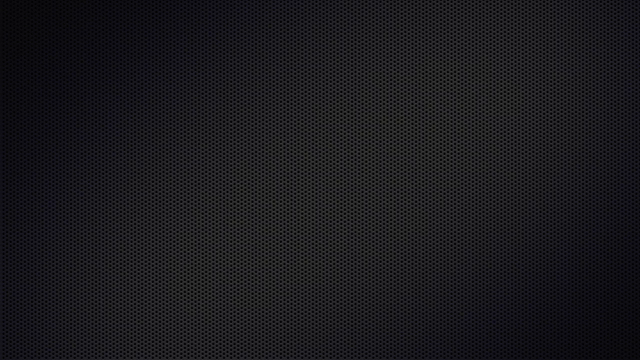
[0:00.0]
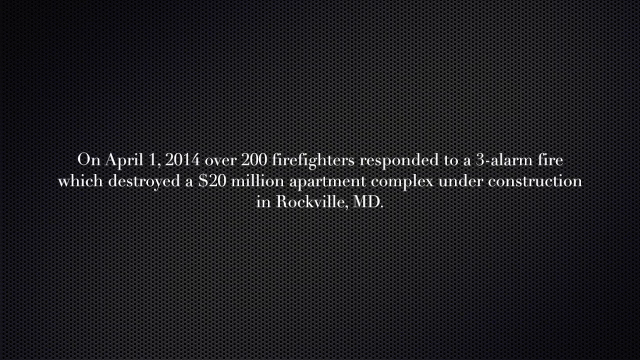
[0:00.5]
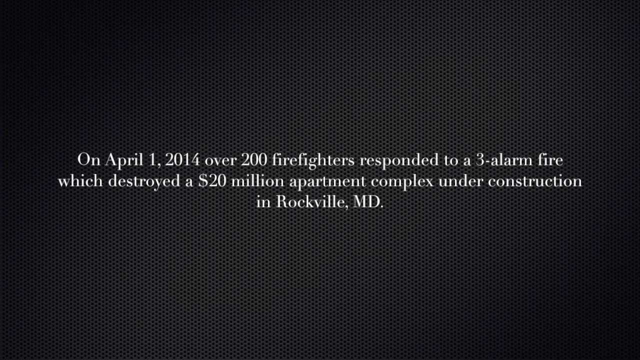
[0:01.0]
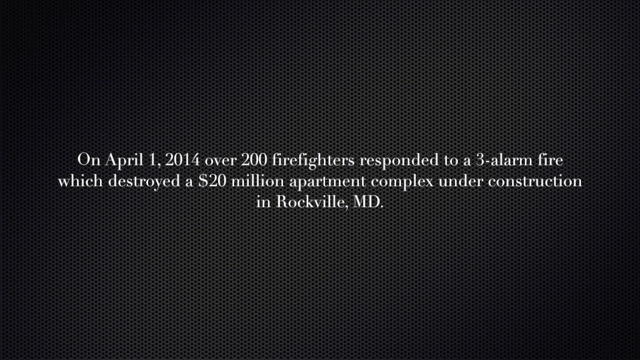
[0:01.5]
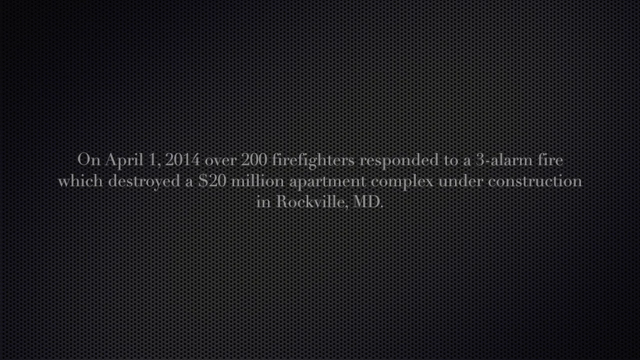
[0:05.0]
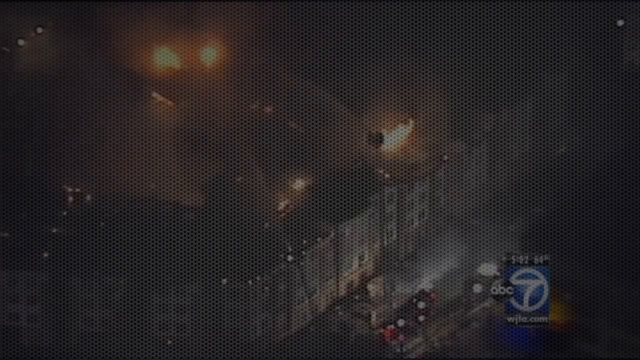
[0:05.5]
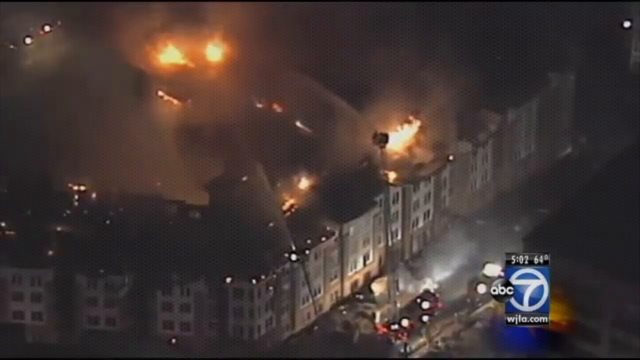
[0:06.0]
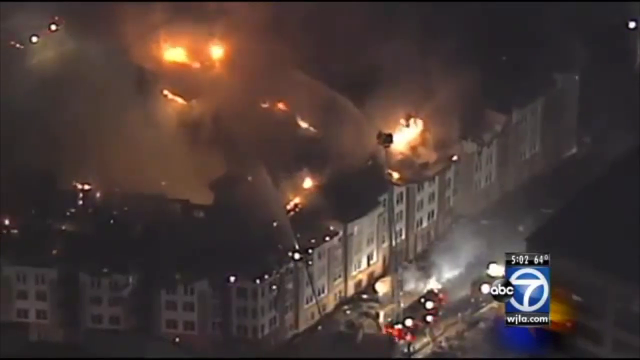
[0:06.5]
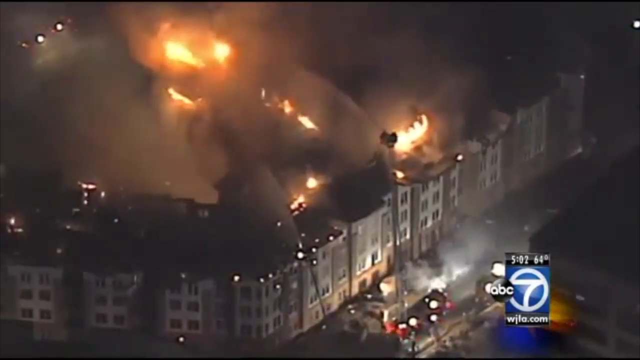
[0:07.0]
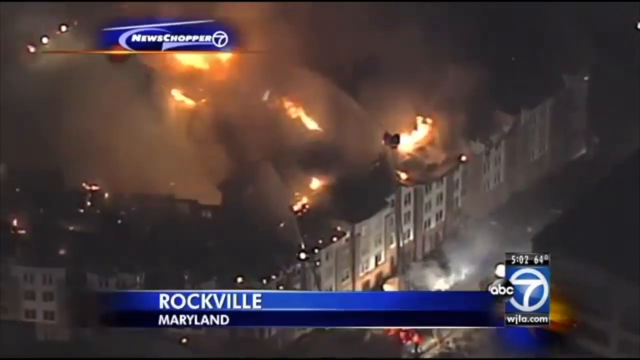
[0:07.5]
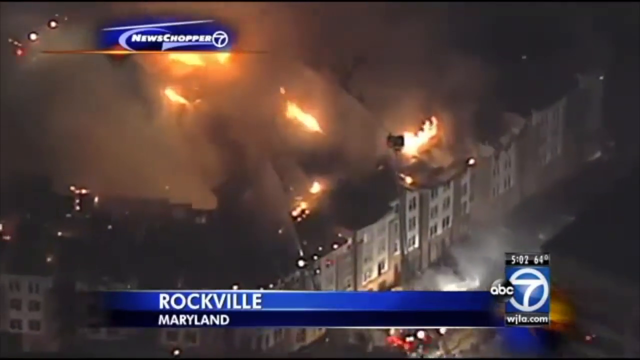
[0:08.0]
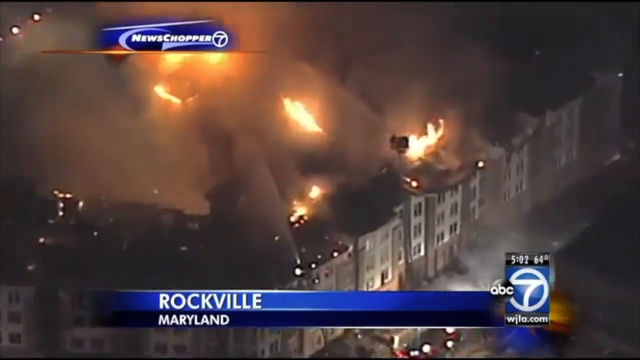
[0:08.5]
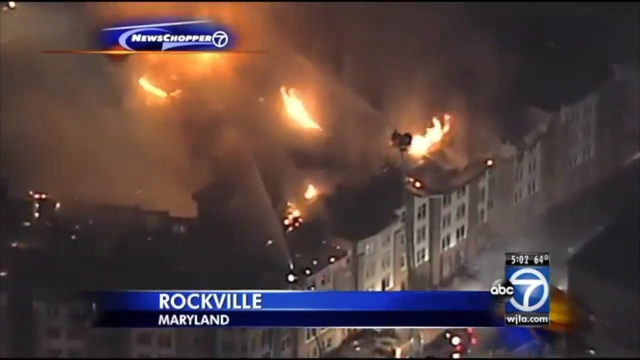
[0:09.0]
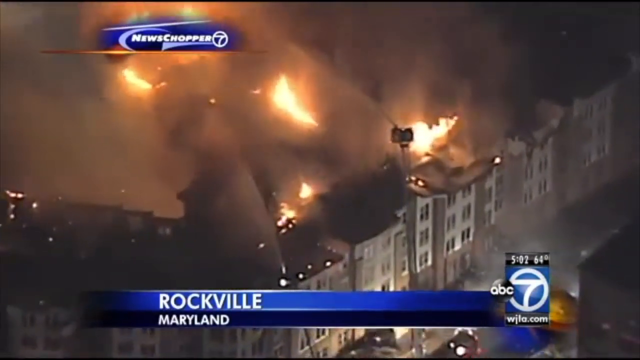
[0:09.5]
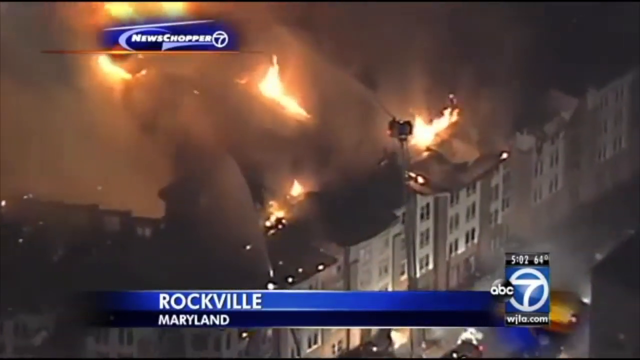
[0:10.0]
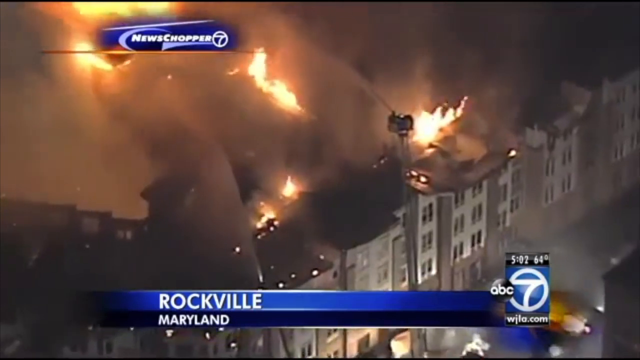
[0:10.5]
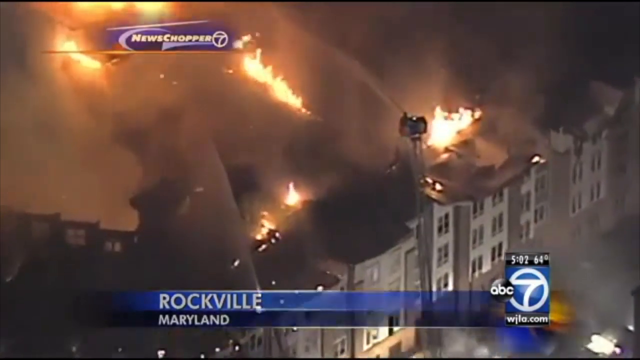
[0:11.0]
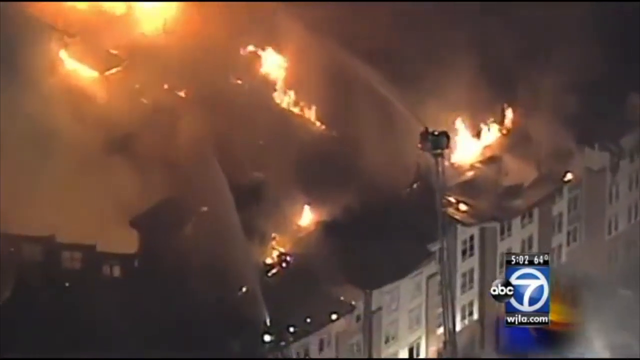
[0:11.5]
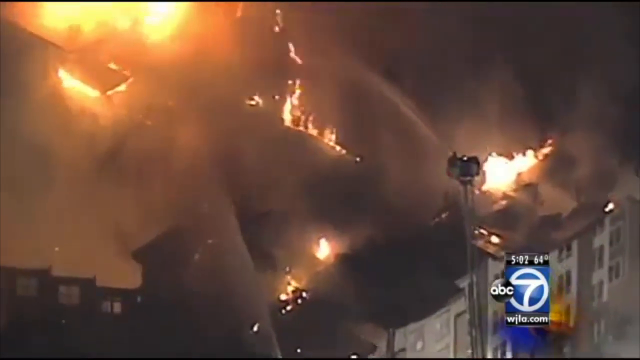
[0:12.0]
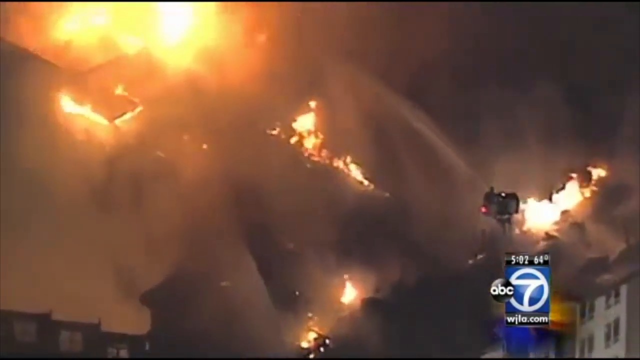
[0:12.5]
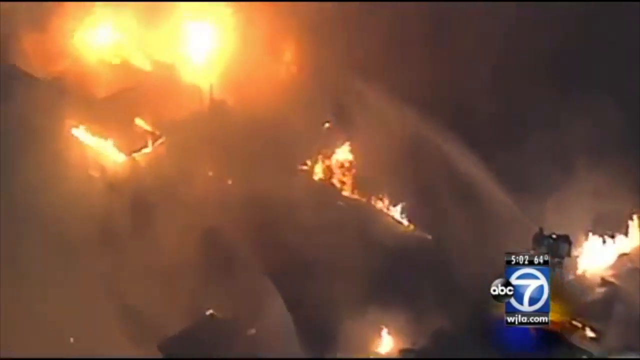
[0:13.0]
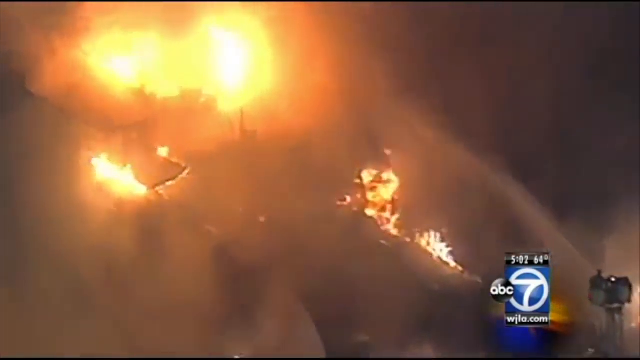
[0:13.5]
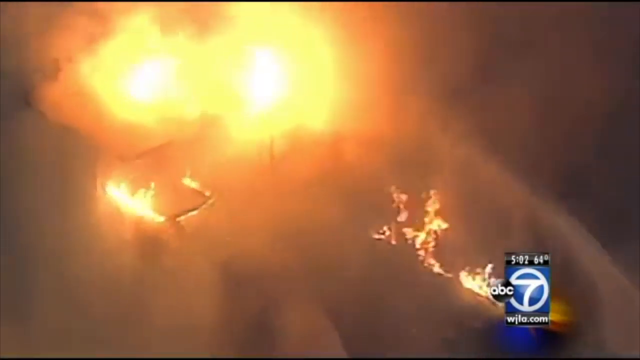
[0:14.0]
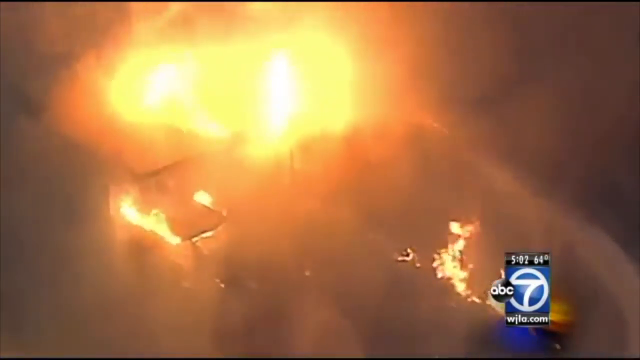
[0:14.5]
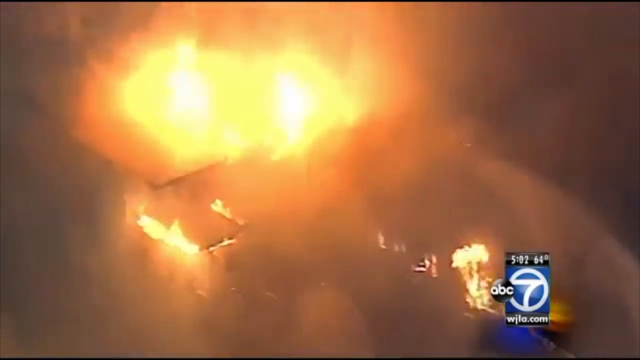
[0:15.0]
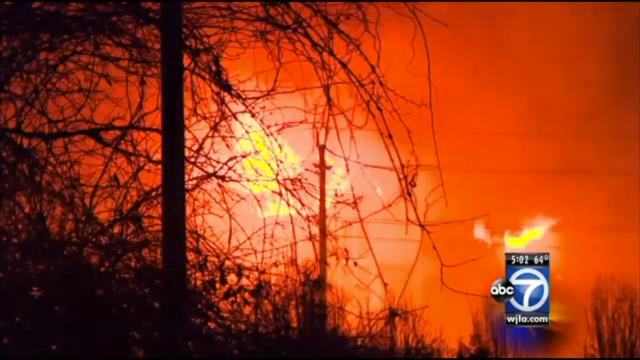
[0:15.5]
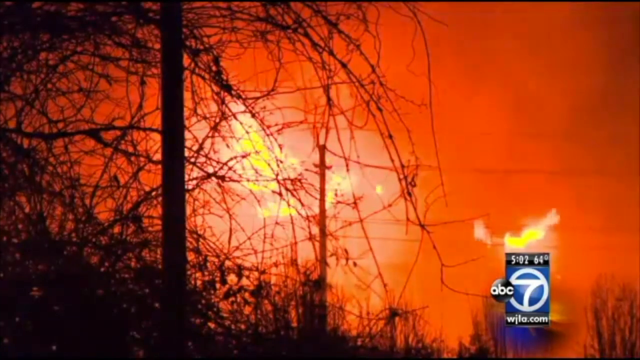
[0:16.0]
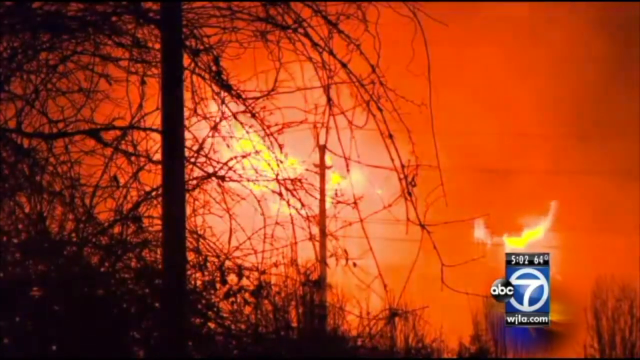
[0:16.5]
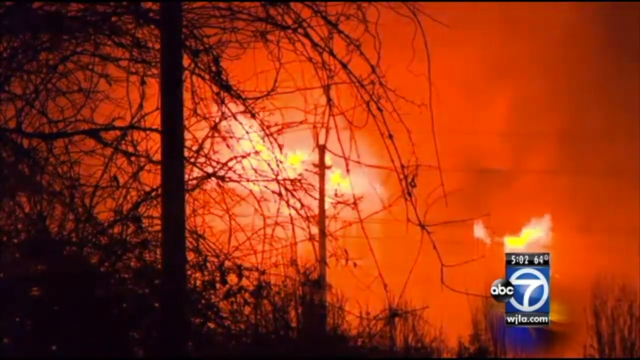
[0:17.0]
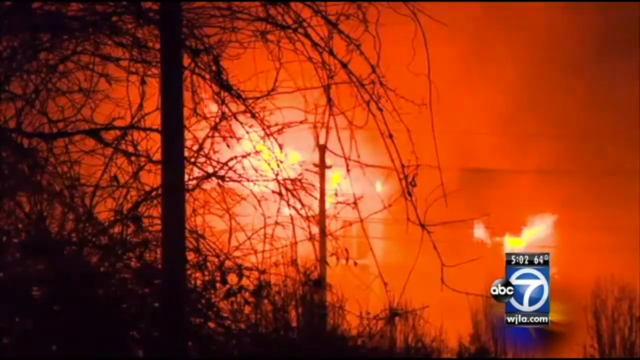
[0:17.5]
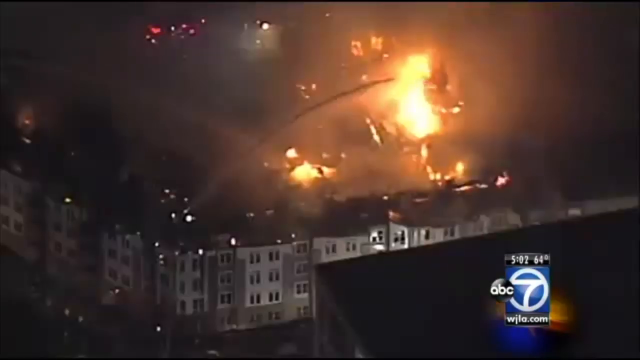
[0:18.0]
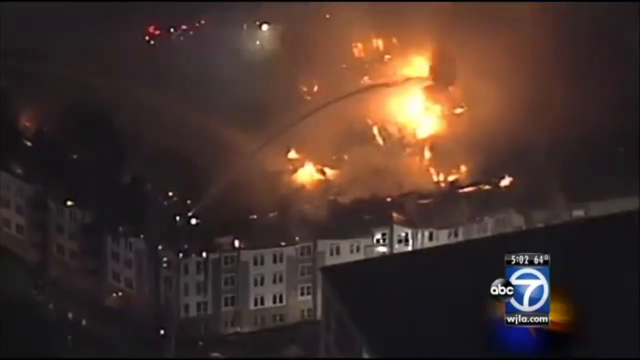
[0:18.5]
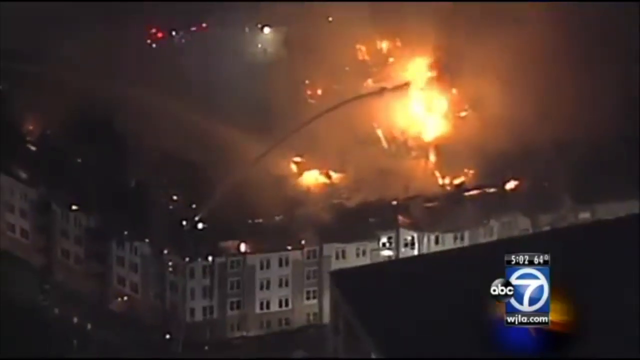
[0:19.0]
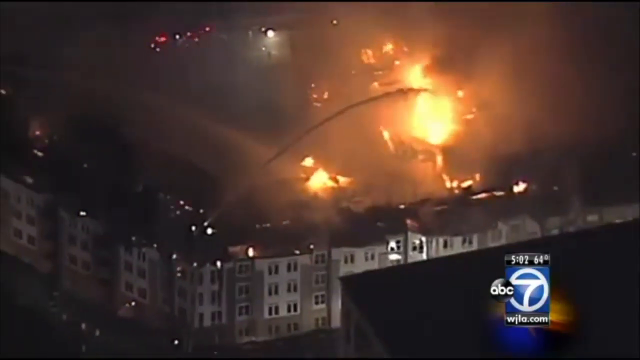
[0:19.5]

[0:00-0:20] The video opens on a black screen where words pop up: "on April 1st, 2014, over 200 firefighters responded to a three alarm fire, which destroyed a 20 million apartment complex under construction in Rockville, Maryland." The next shot comes from an ABC7 news story, with the time shown as 5:02 and the temperature as 64 degrees. It looks like it was taken from a helicopter above the scene. It is already dark, so the footage is hard to see, but there are multiple fires on top of the buildings. A banner appears in the top left corner reading "News Chopper 7," and a banner at the very bottom reads "Rockville, Maryland." The video zooms in on the fire. On the right side a fireman up in a bucket has water aimed at the fire. The next shot shows a fire that looks like it is in a forest, with a large red glow. The video then goes back to the fire at the buildings, where water is shot from the left side onto the fire on top of a building.